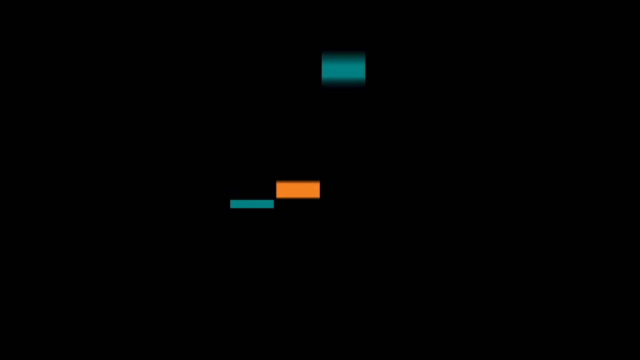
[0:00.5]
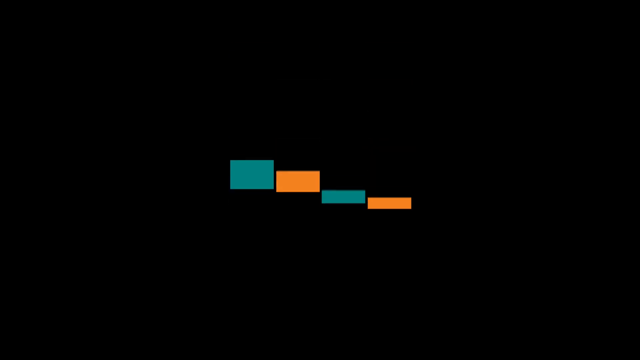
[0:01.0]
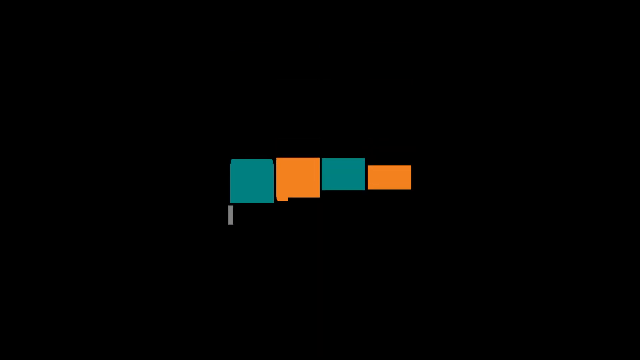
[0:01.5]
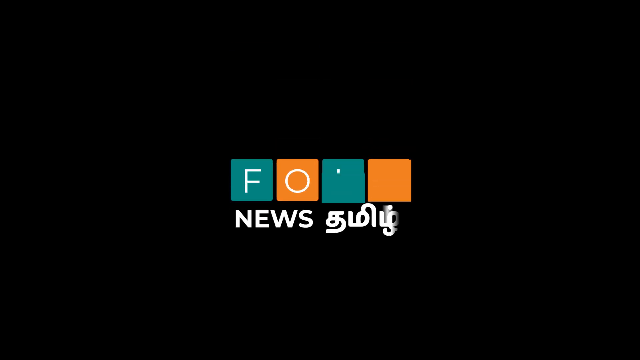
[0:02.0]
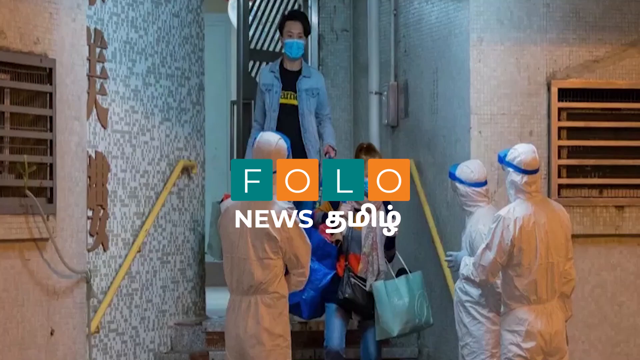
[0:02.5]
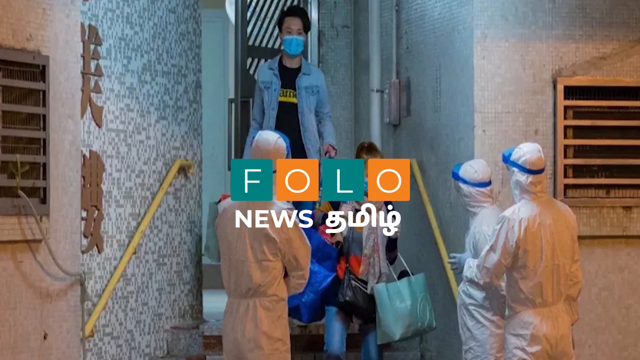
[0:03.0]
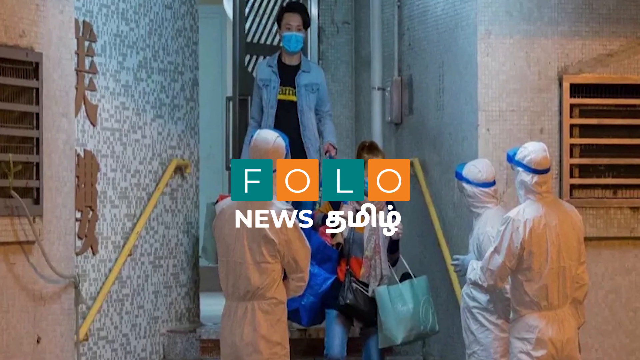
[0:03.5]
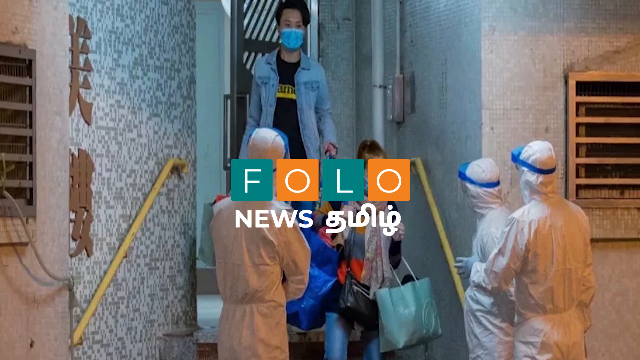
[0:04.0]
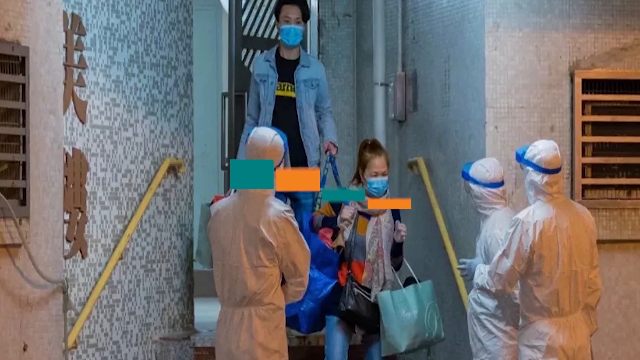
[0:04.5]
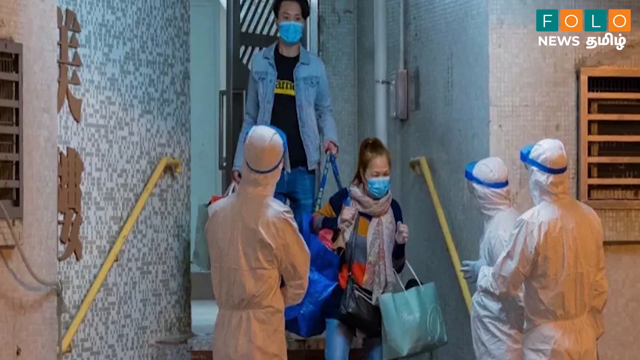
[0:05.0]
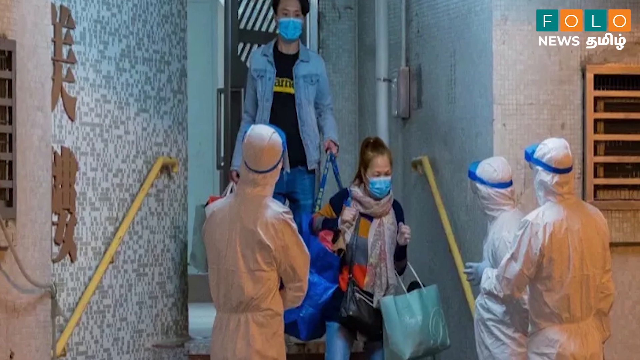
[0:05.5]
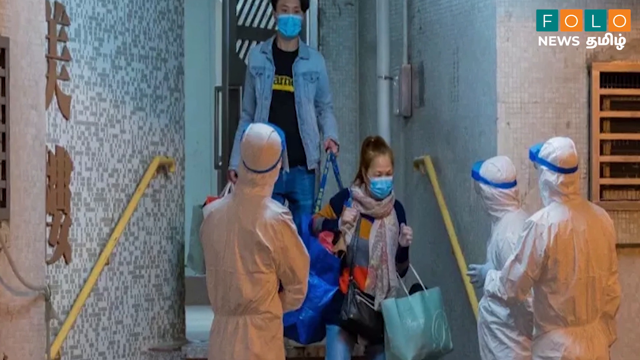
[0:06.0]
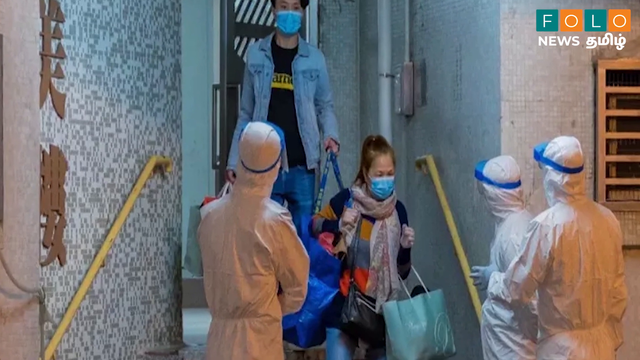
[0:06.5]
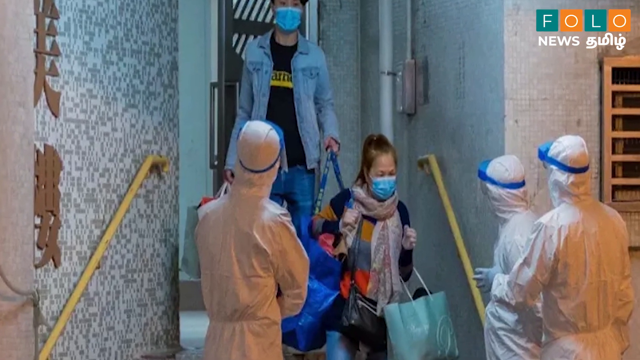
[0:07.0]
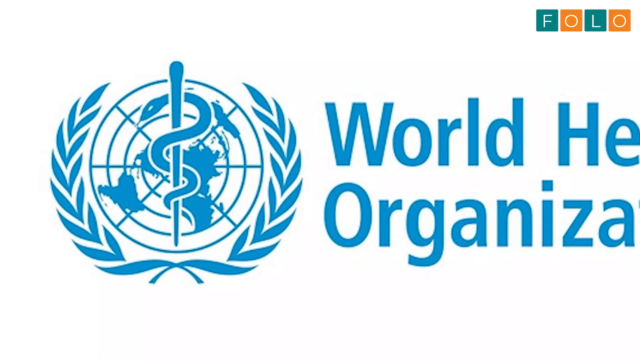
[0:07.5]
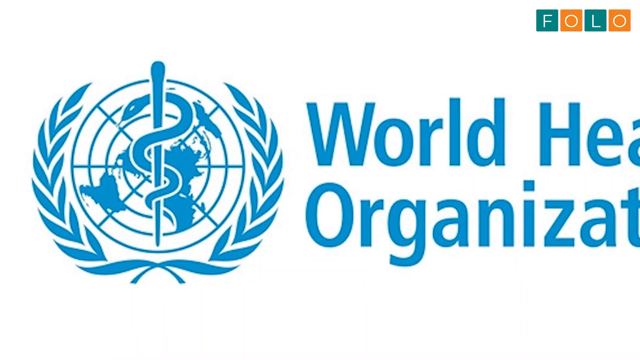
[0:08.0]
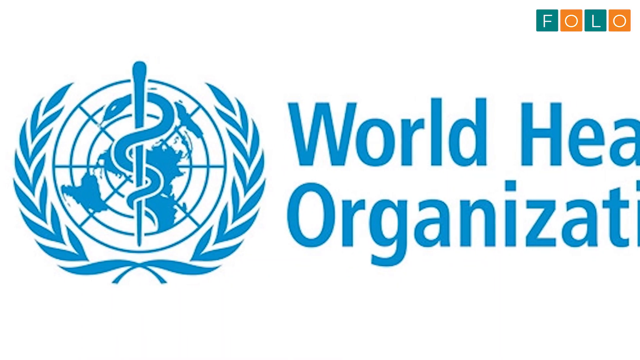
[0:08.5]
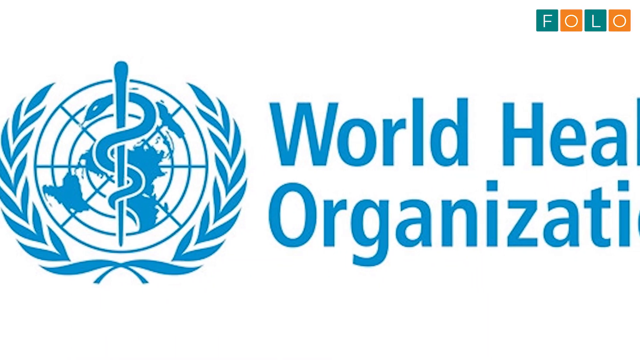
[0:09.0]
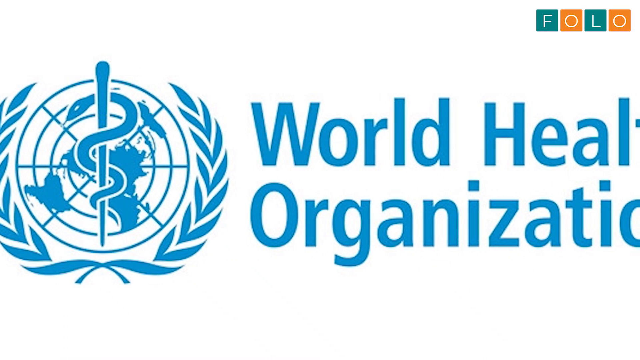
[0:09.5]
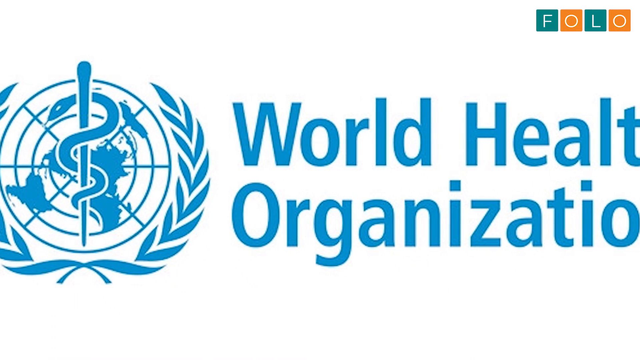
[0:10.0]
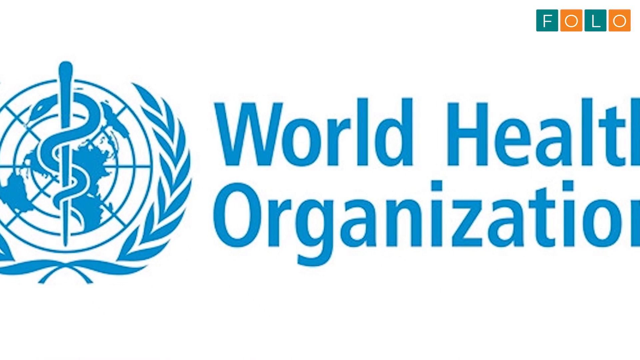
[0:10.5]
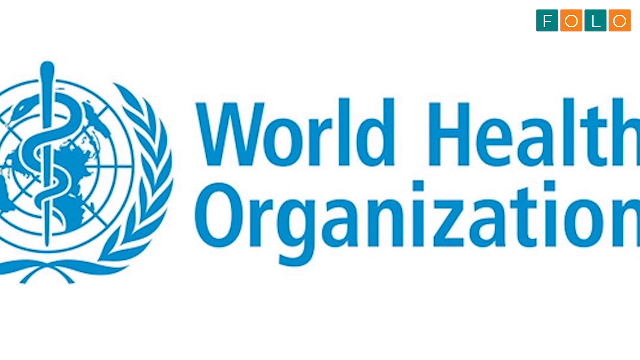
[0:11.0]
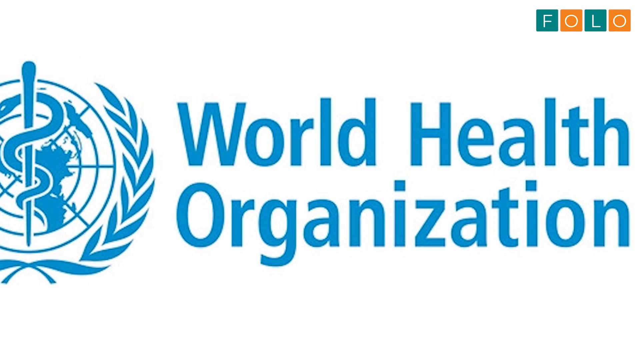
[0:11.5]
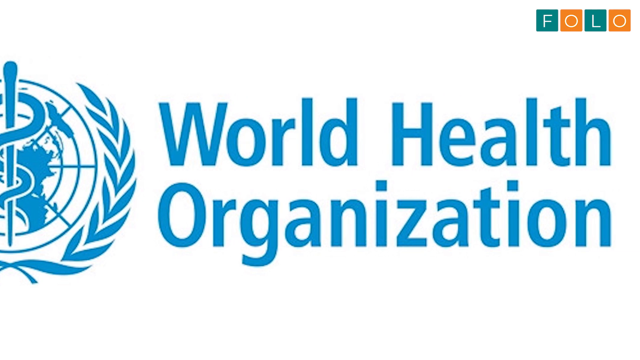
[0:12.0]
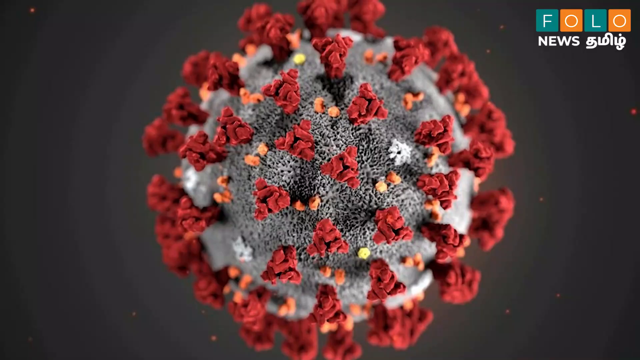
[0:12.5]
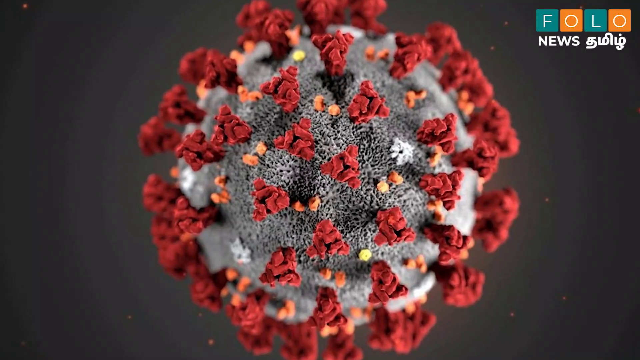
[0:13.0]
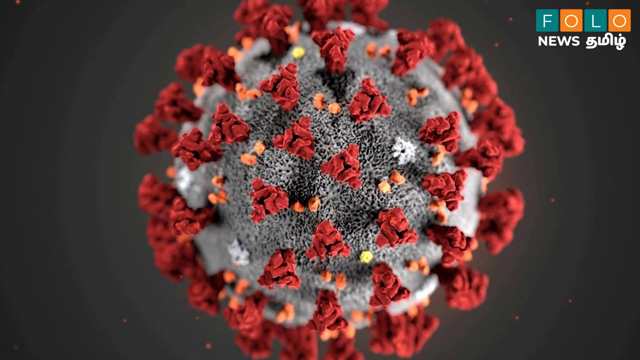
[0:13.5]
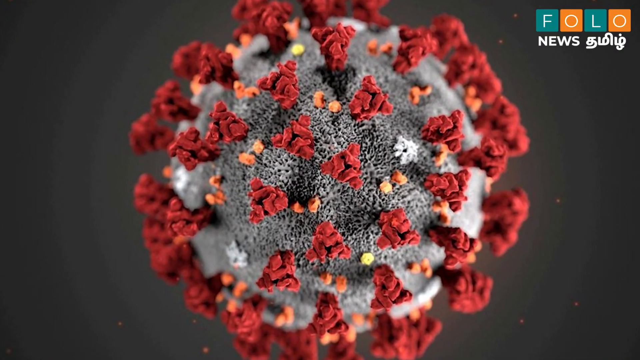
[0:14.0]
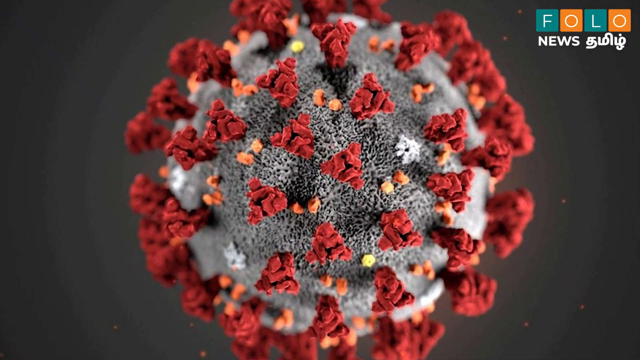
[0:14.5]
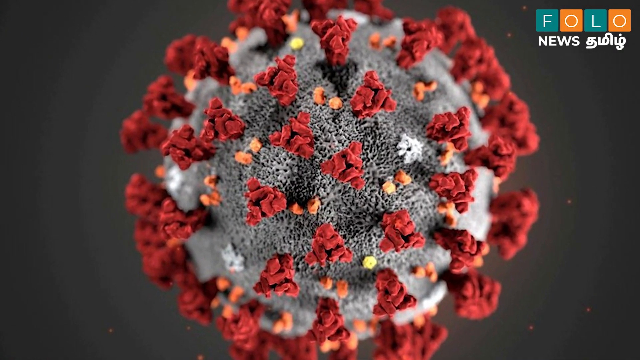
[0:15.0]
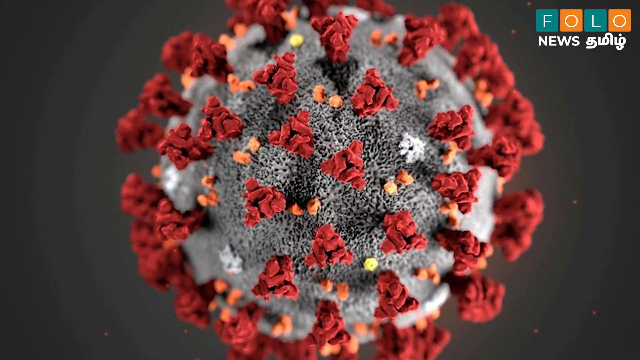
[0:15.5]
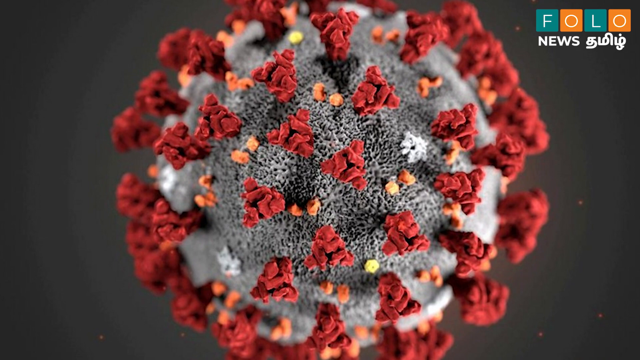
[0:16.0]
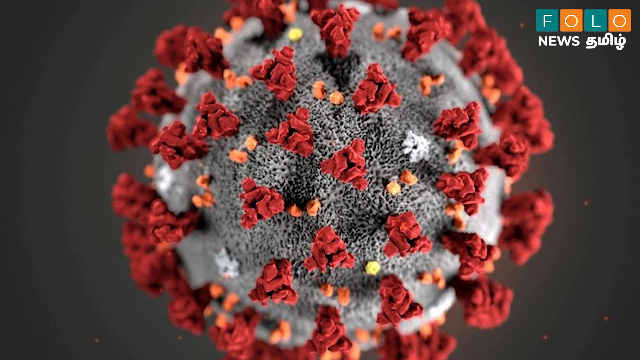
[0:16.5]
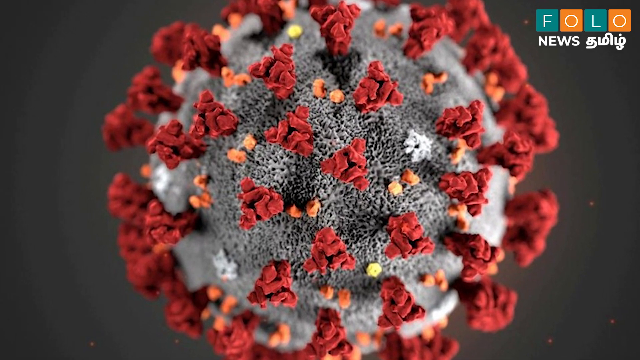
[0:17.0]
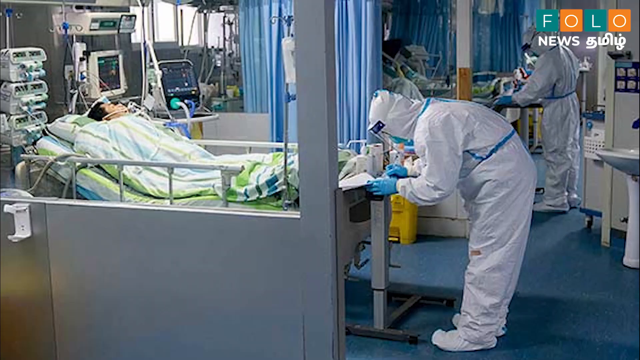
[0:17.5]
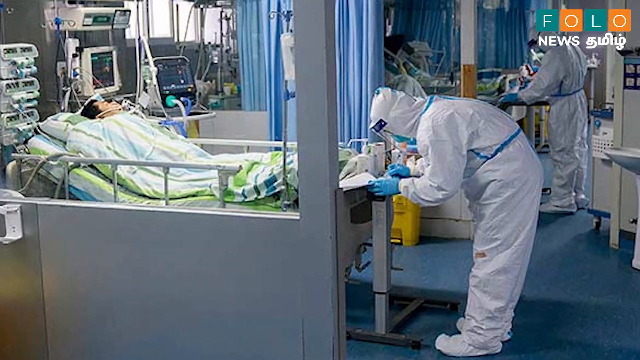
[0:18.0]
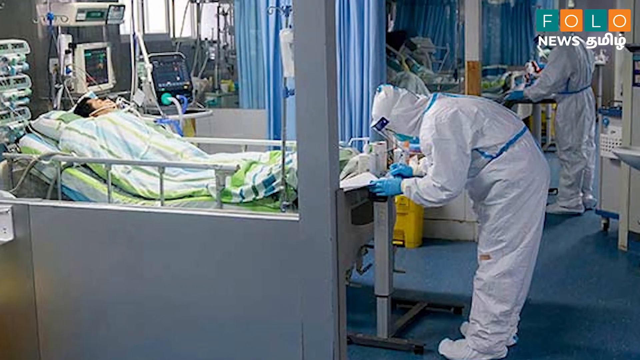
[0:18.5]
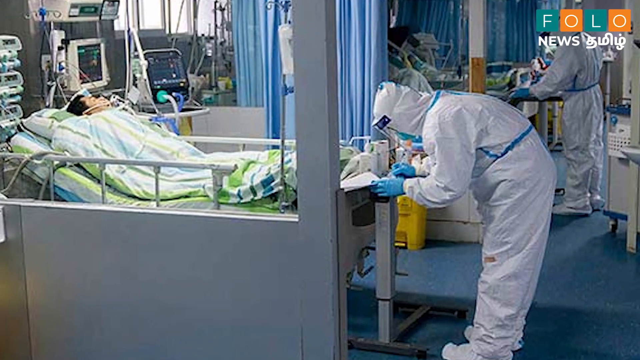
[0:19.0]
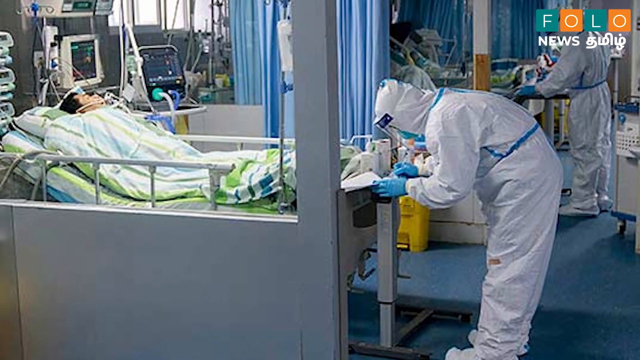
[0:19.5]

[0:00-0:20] The video appears to come from a news channel called FOLO News, whose name is followed by writing in an unrecognized language, possibly Thai or Malaysian. The logo consists of two kind of teal boxes and two orange boxes: the teal boxes hold the letters F and L, and the orange boxes hold the letter O, in white font. Underneath is the word "news" followed by the unrecognized letters. It starts on a black background, then cuts to what appears to be a photograph of a man and his wife holding paper bags and coming out of what may be their apartment. Three people in white hazmat suits and apparently blue goggles are kind of looking up at the man; the scene is probably set during COVID. The World Health Organization logo pans across the screen, followed by what appears to be a close-up of the COVID-19 virus with its spikes. Then a young man lies in a hospital bed with health care workers in white hazmat suits at the foot of his bed.